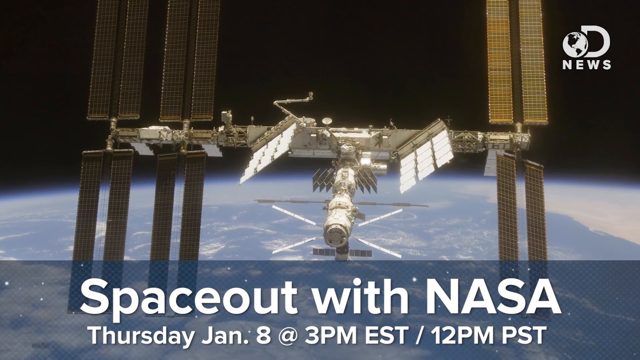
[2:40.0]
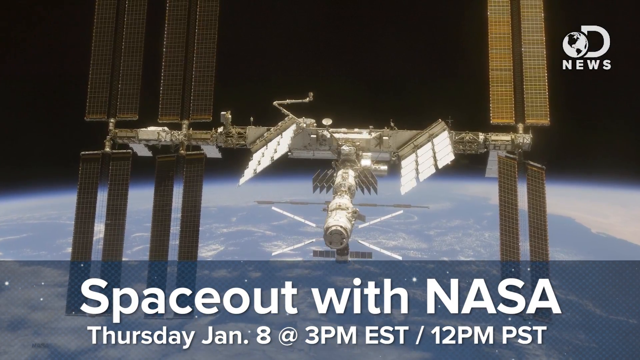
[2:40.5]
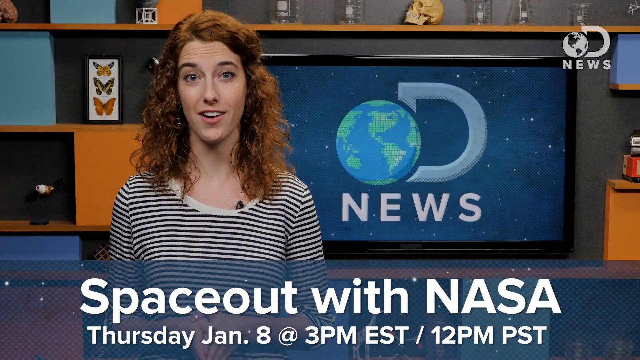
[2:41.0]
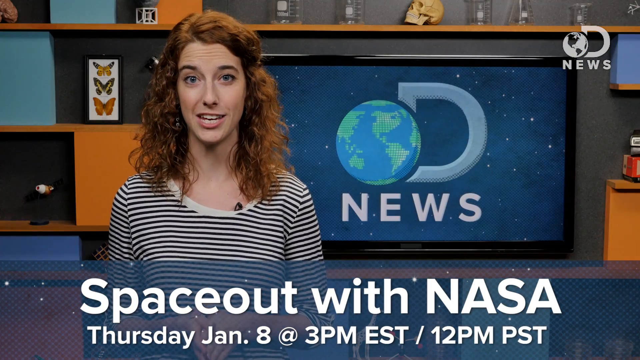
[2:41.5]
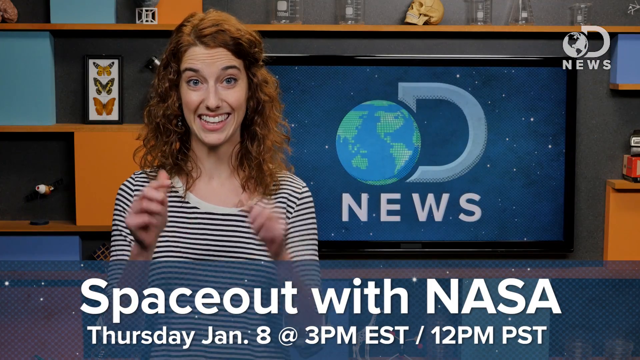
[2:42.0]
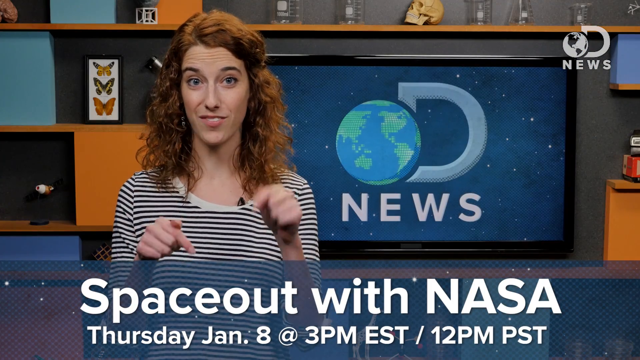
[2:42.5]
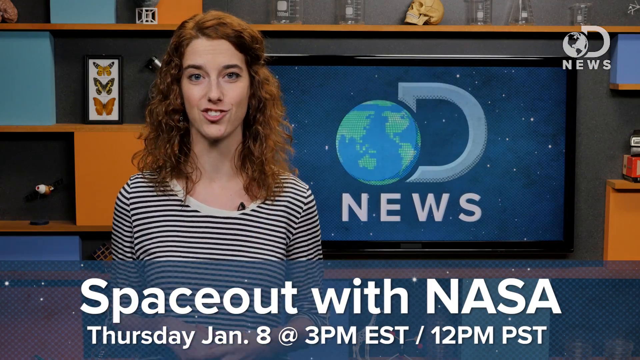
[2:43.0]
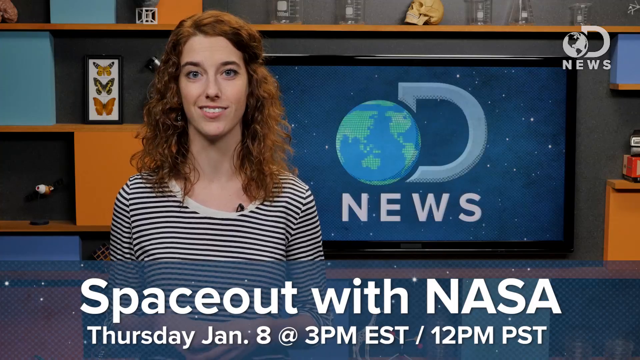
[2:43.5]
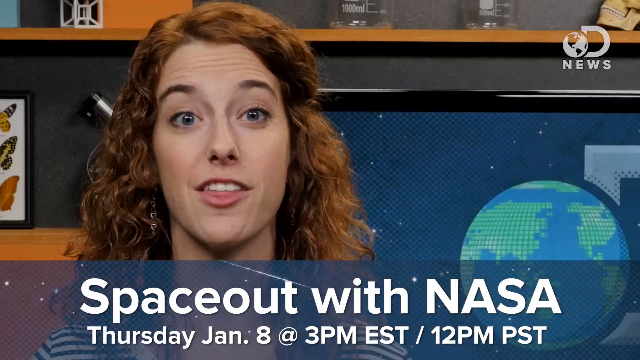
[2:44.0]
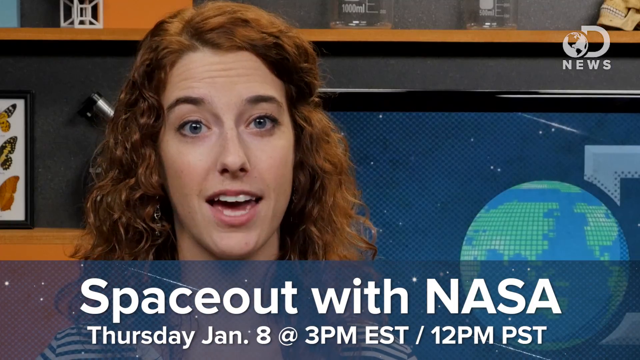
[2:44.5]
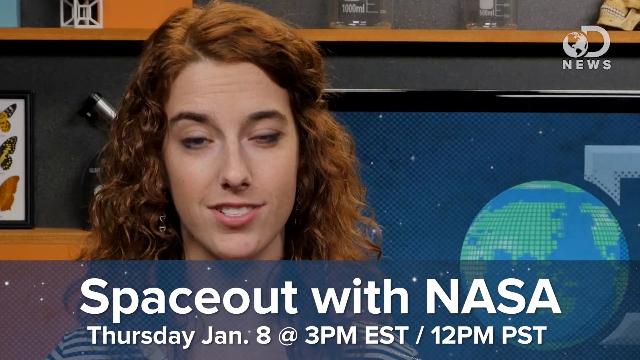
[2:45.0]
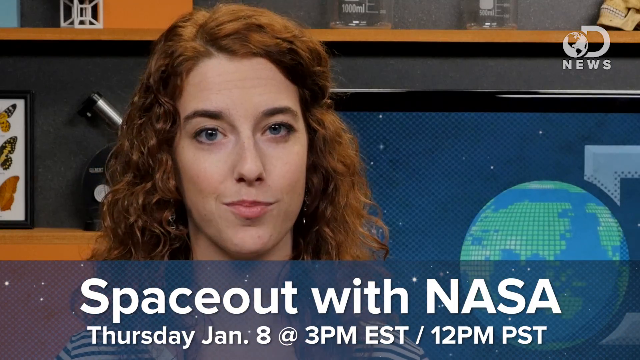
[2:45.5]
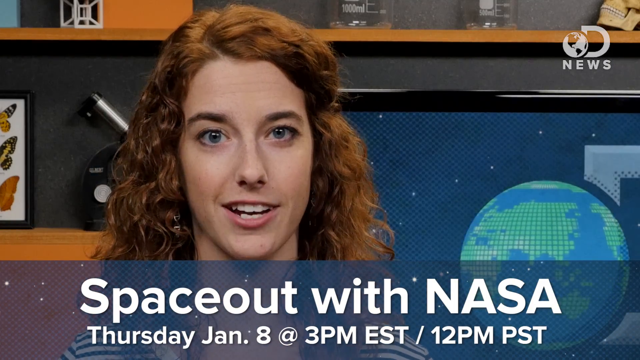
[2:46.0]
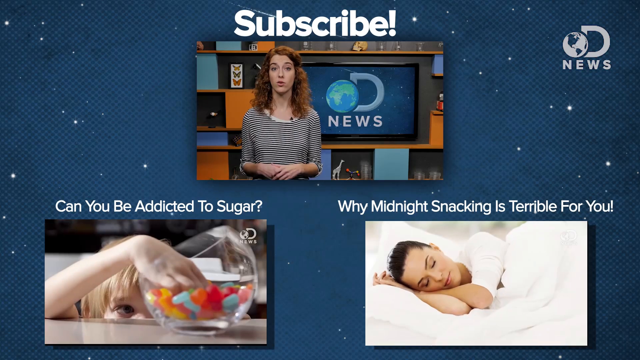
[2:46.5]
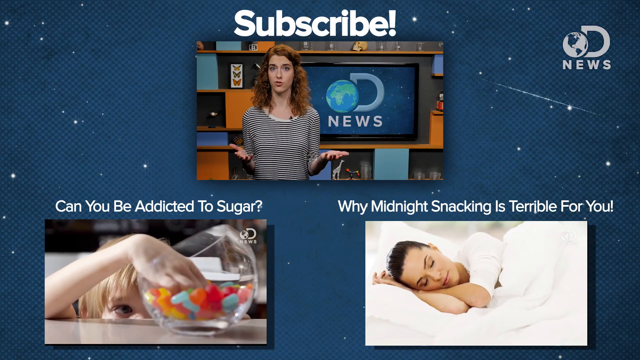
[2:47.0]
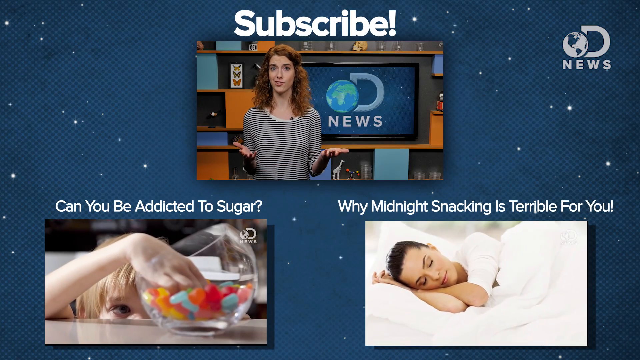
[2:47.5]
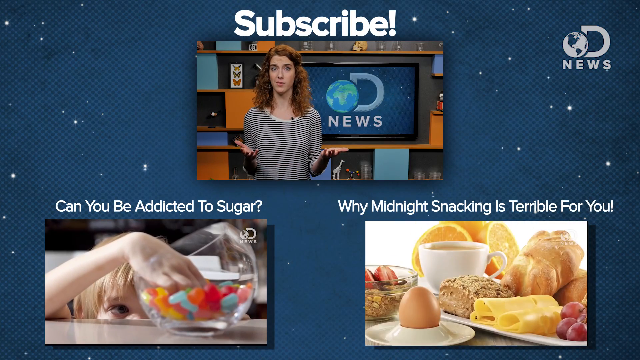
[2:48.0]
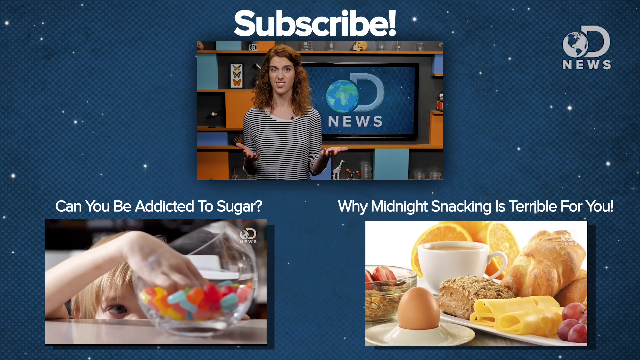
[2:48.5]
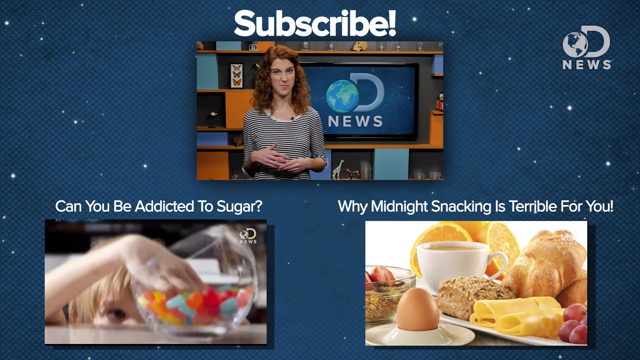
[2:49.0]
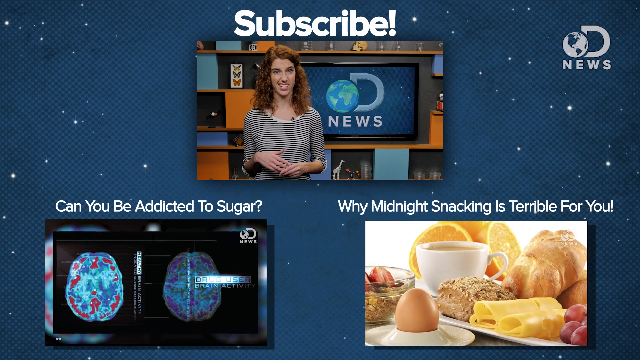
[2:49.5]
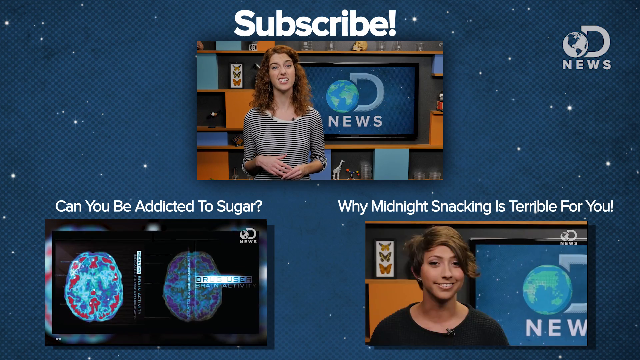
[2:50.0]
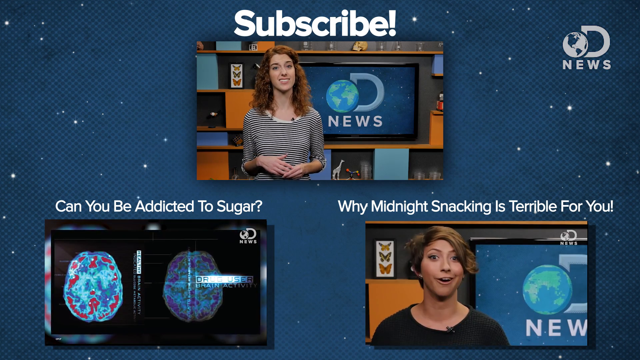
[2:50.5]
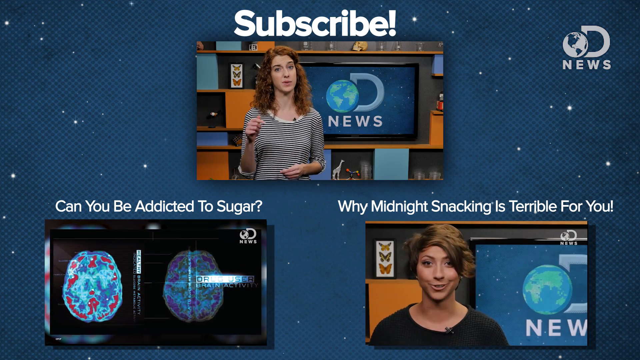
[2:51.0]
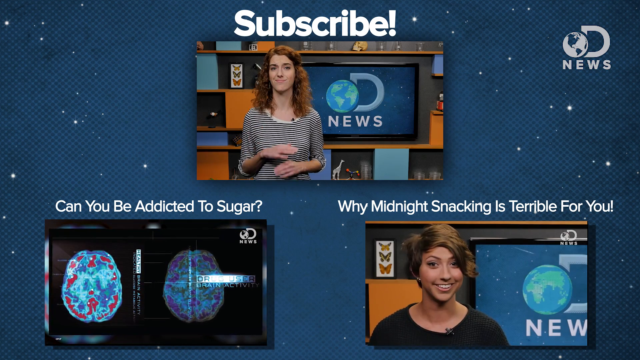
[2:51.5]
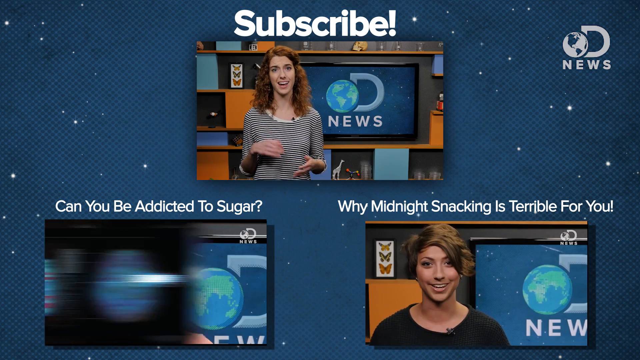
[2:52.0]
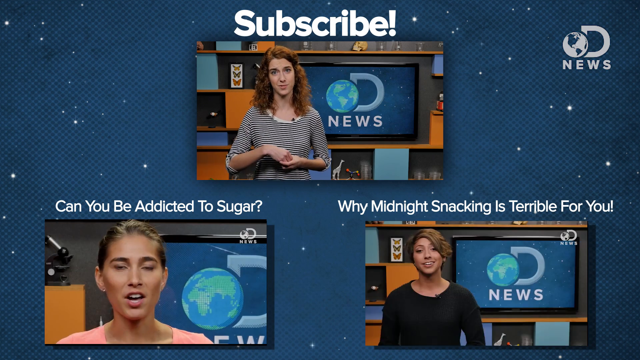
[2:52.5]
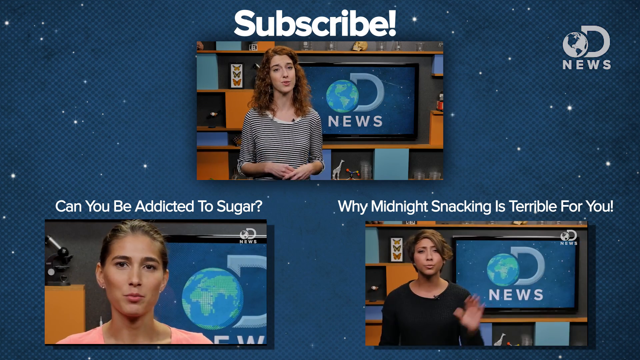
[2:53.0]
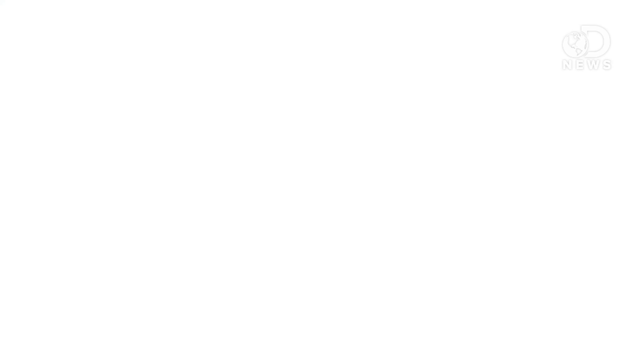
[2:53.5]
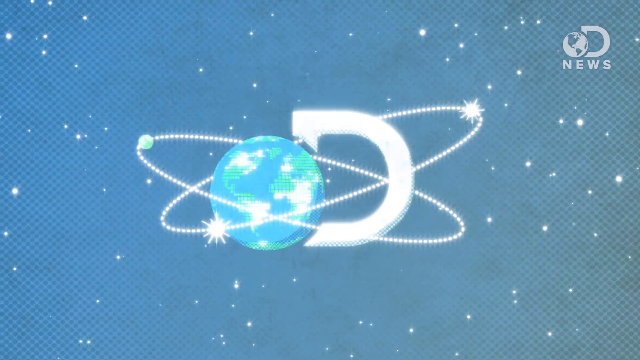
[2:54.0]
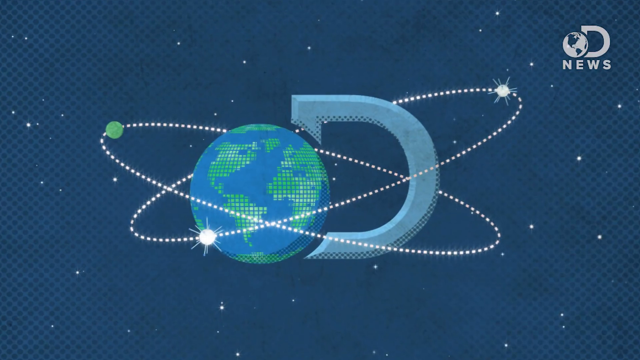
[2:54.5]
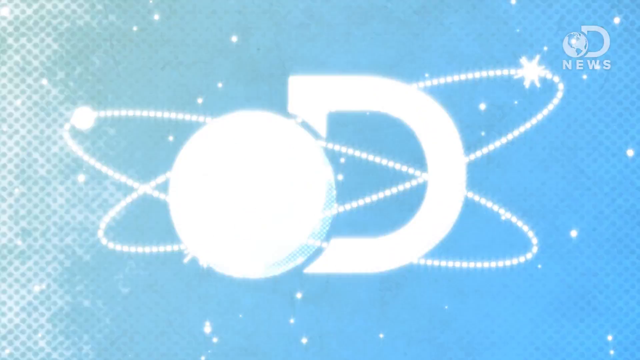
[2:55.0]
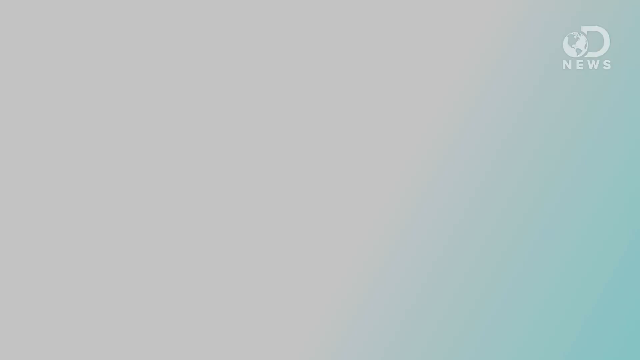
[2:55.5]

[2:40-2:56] A young woman with long, curly red hair stands next to a TV that shows what looks like maybe world news: a picture of Earth, a capital letter D, and "News" underneath. The topic is can you trust the calorie counts on foods. The bottom of the video shows "spaceout with NASA." She seems to point the audience toward other videos from the channel, on topics such as whether you can be addicted to sugar and why midnight snacking is terrible for you.